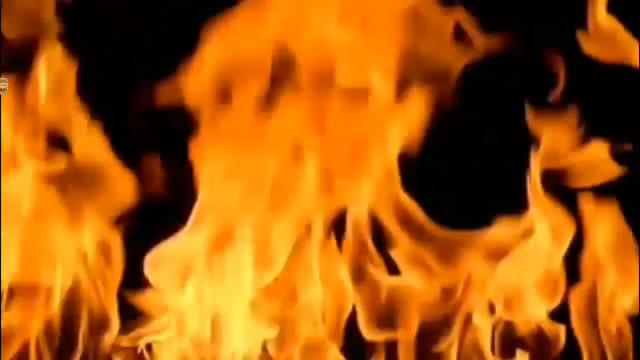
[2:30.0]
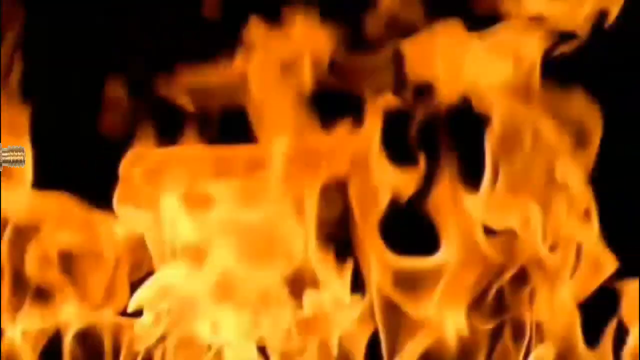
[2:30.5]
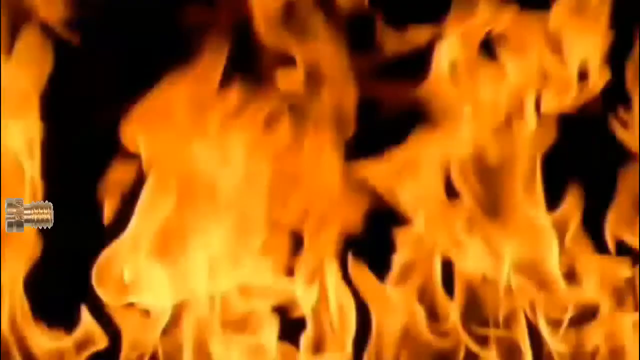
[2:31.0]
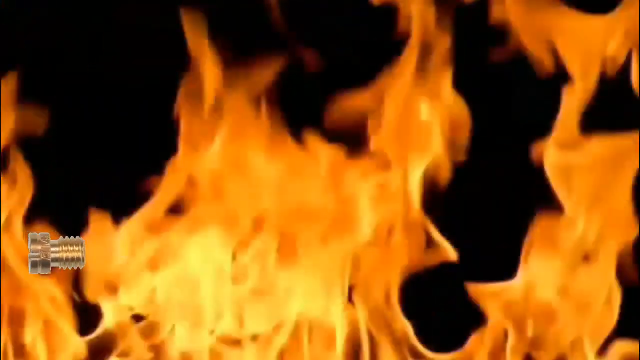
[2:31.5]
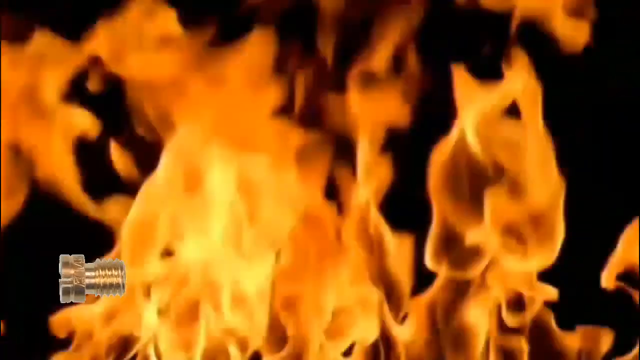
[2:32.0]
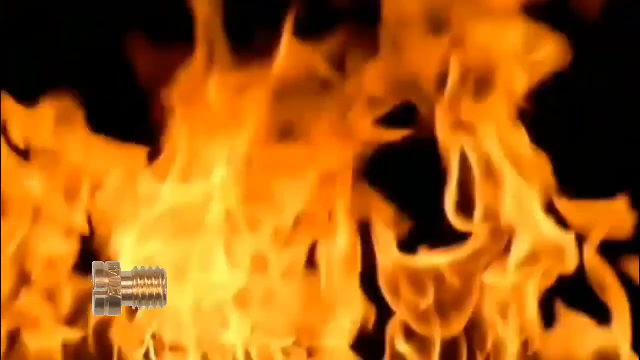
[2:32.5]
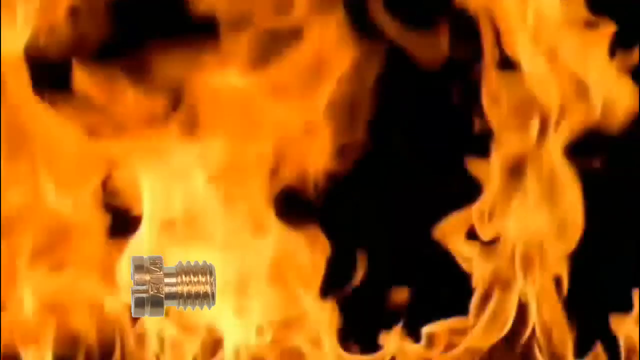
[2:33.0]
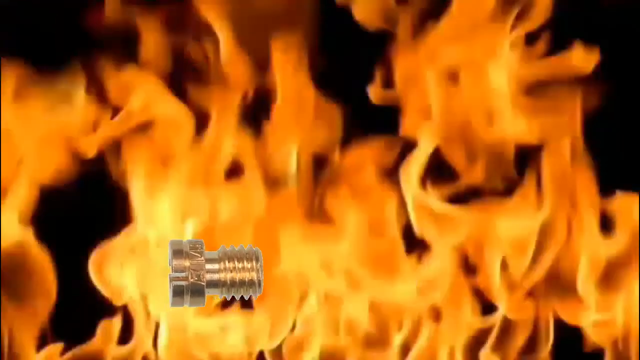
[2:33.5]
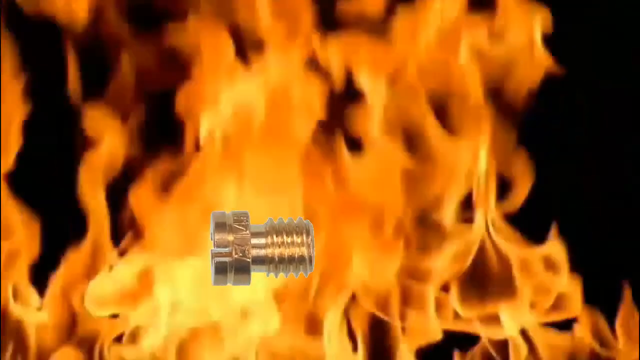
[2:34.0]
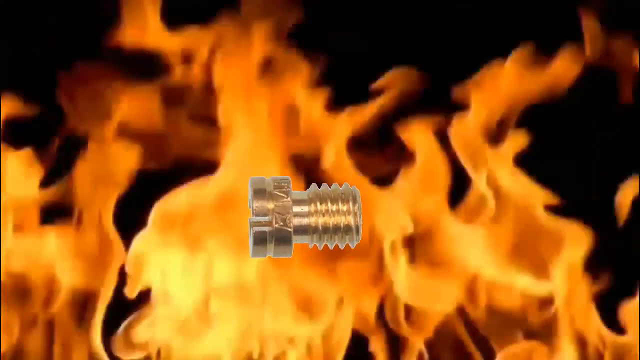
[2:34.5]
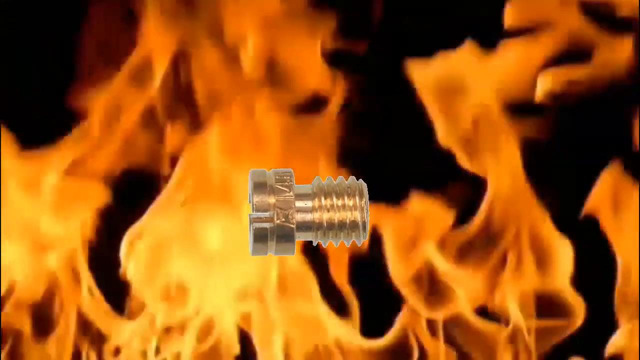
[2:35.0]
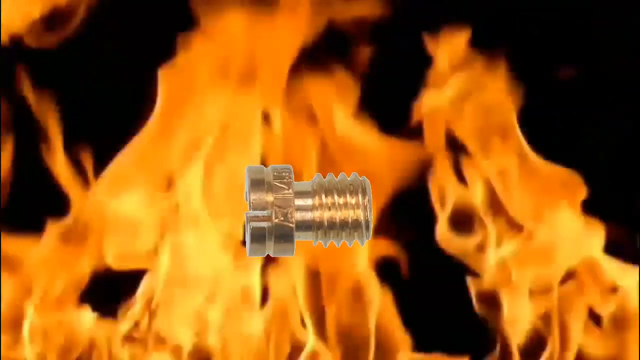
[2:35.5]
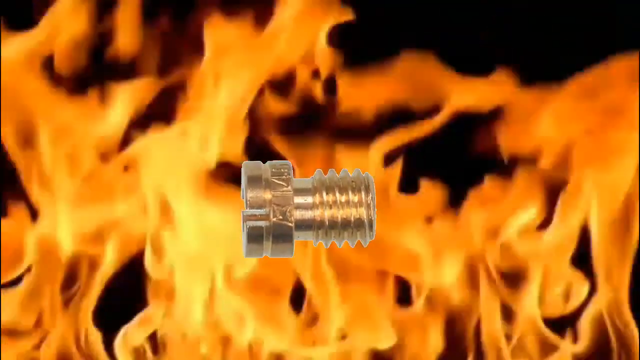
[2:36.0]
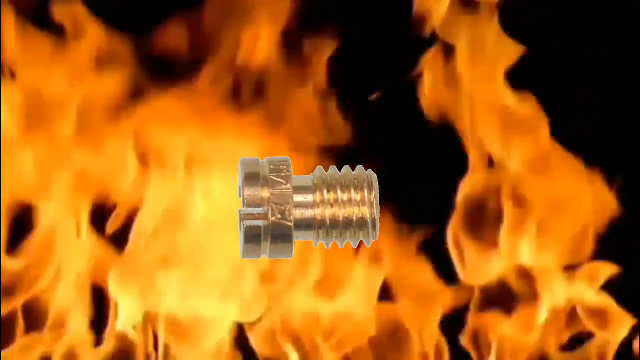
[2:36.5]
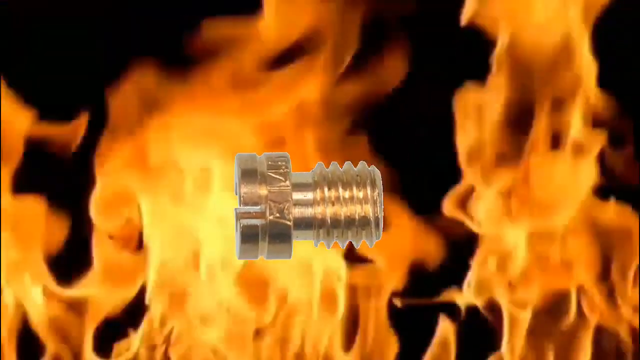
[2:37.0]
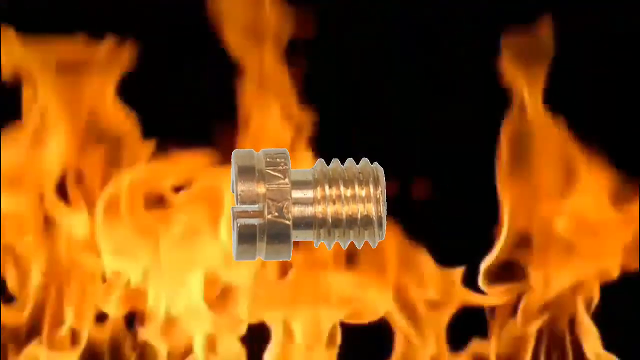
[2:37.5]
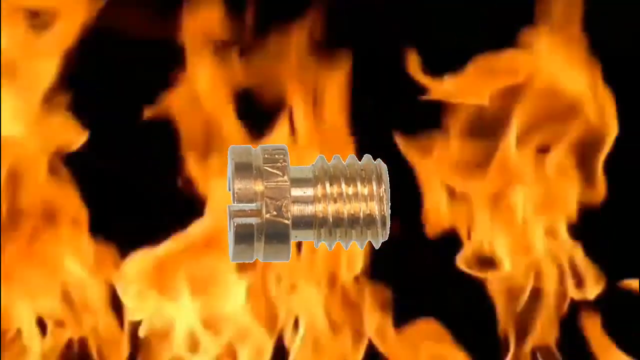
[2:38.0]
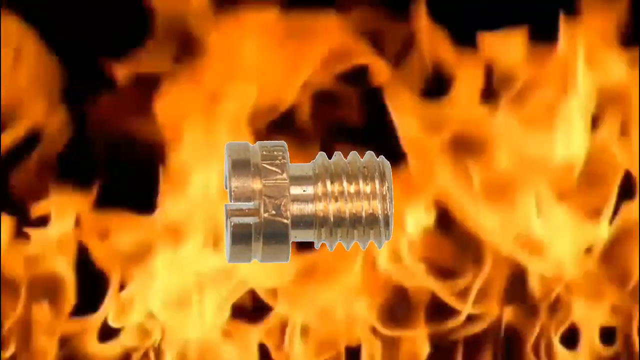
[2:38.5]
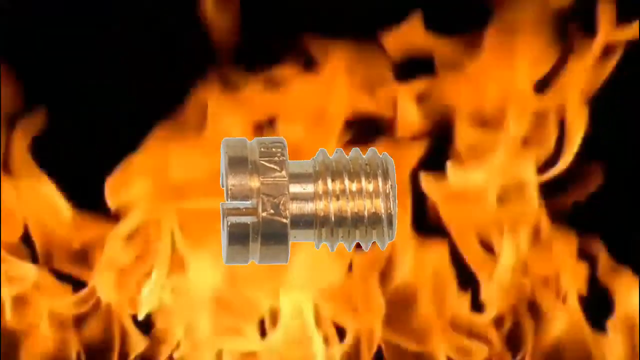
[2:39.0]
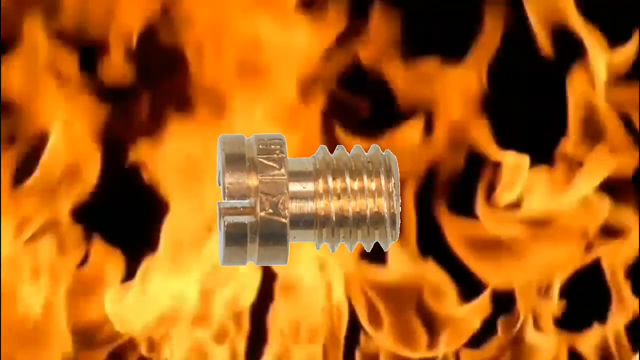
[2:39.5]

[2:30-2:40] A screw comes in, center stage and in the front, even bigger than the silver cylinder tube shown before; it looks like the idle screw or the air mix screw. Fire is in the background.